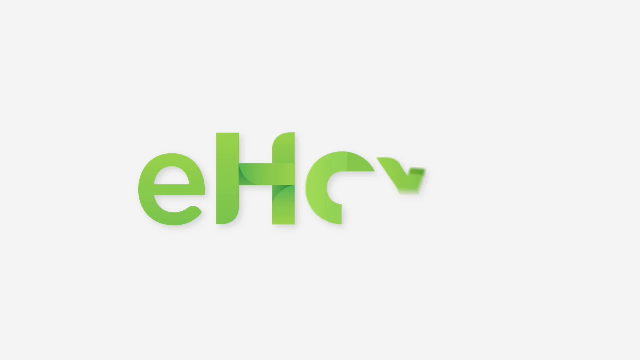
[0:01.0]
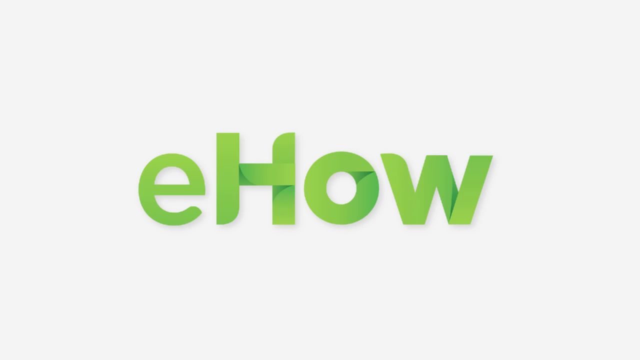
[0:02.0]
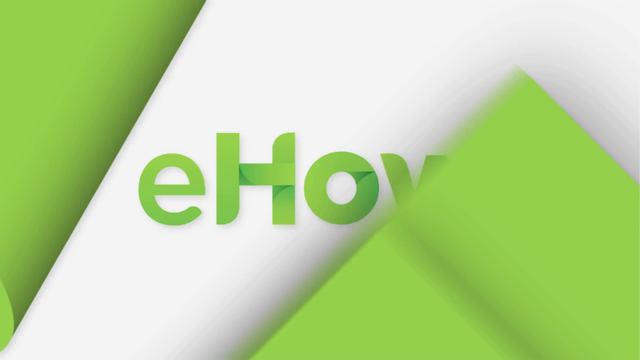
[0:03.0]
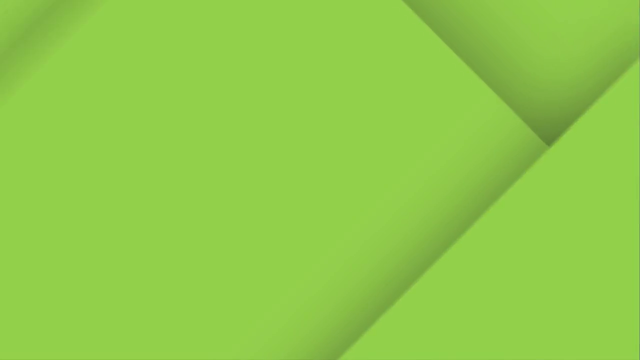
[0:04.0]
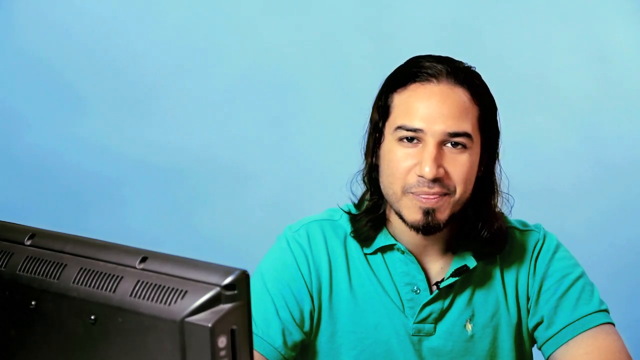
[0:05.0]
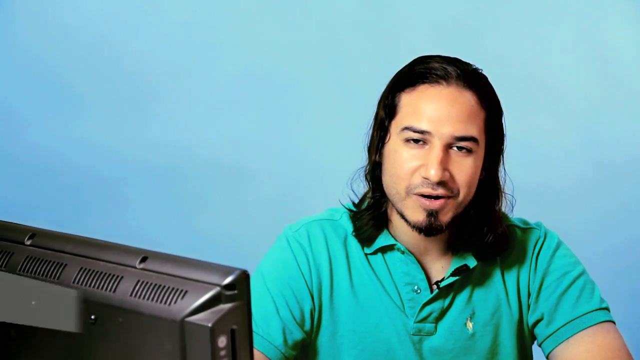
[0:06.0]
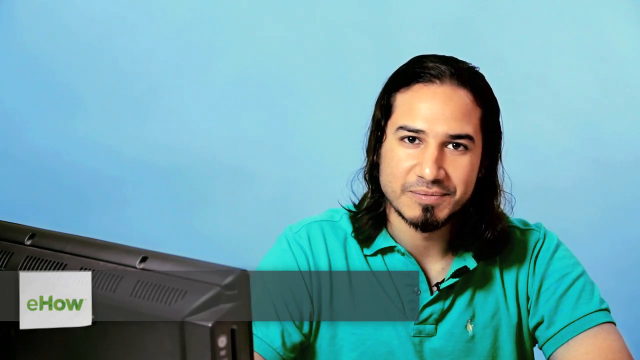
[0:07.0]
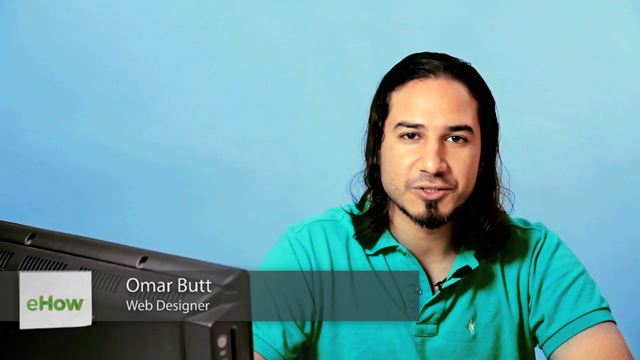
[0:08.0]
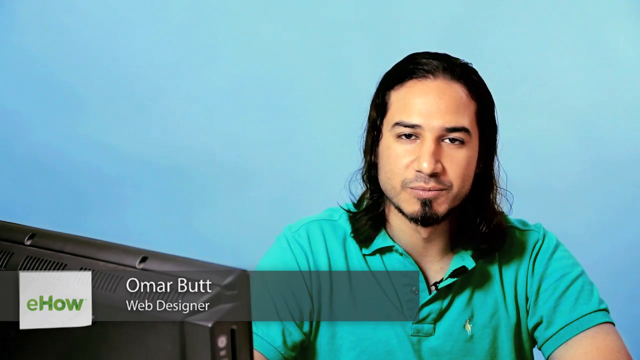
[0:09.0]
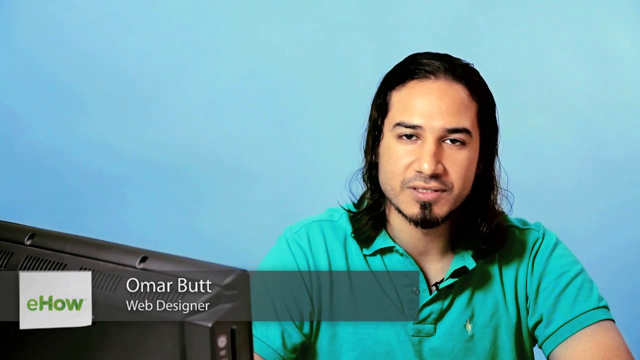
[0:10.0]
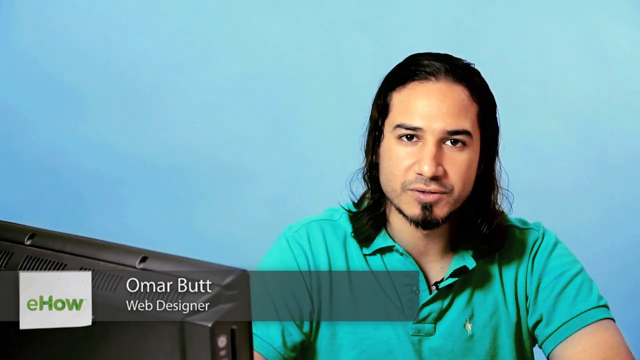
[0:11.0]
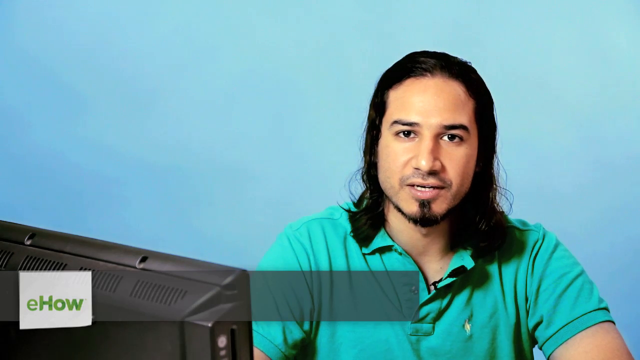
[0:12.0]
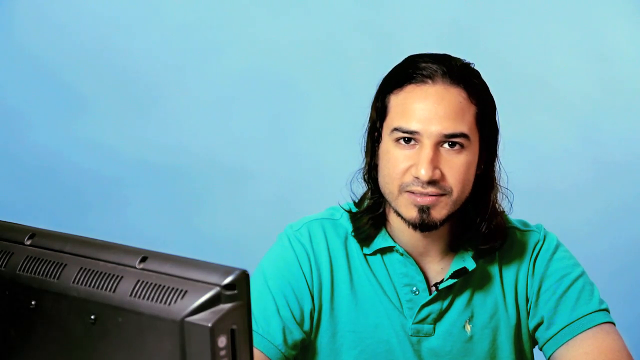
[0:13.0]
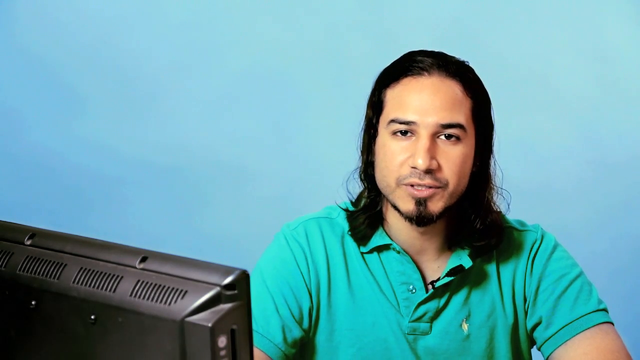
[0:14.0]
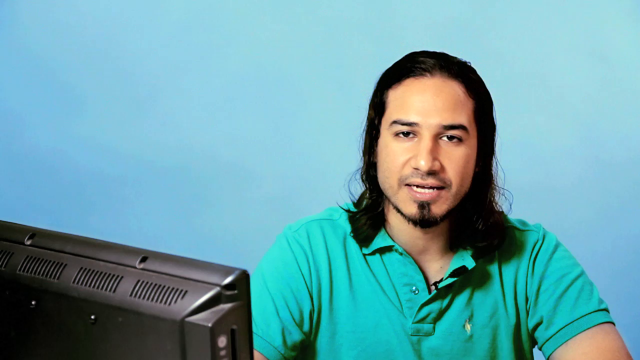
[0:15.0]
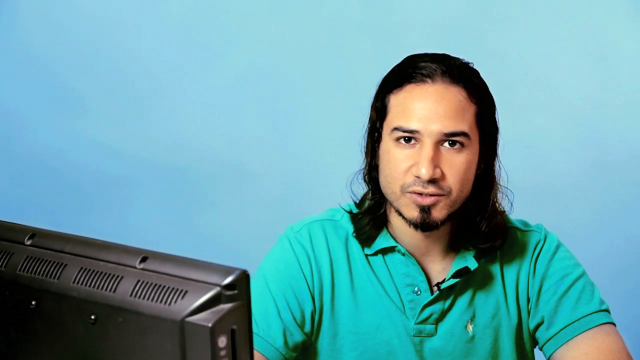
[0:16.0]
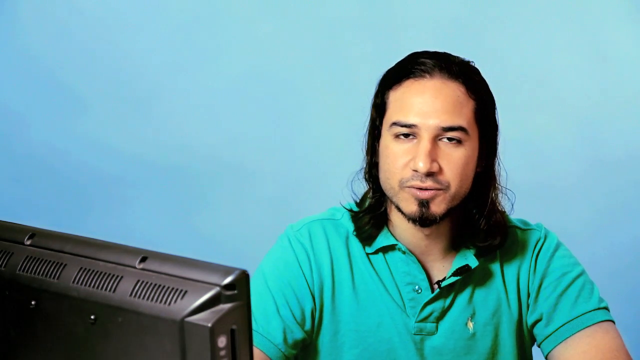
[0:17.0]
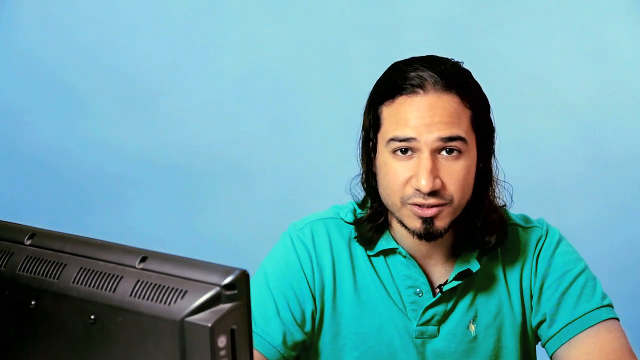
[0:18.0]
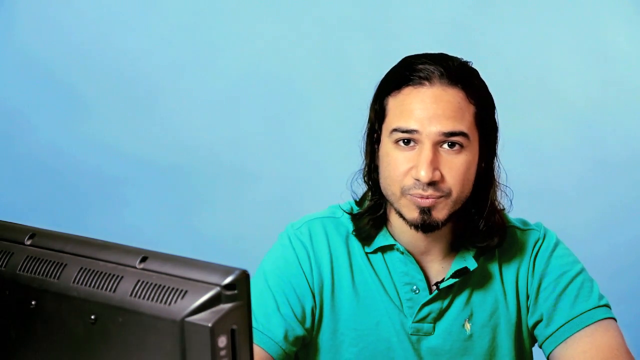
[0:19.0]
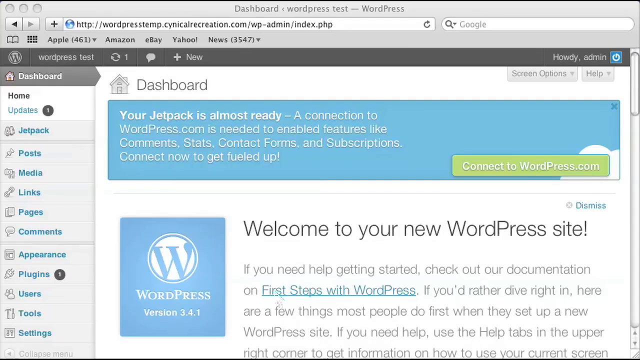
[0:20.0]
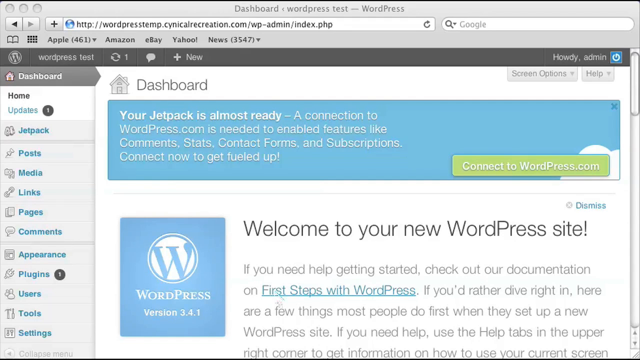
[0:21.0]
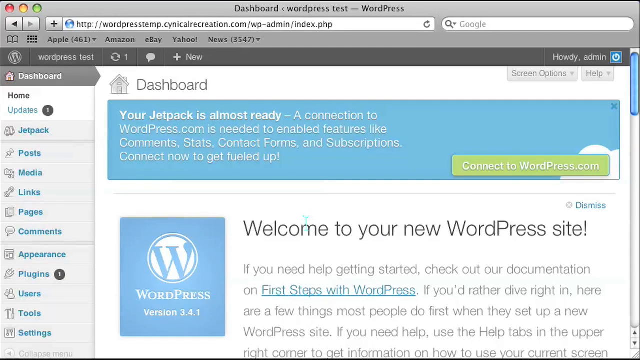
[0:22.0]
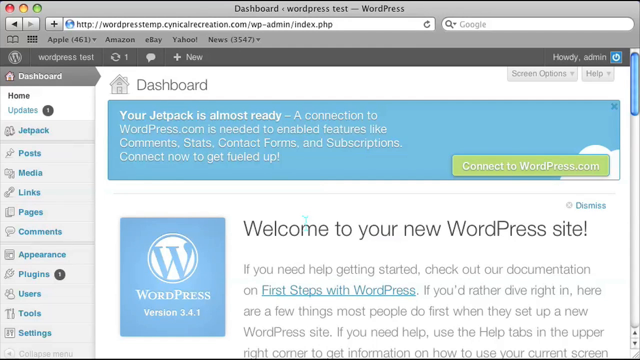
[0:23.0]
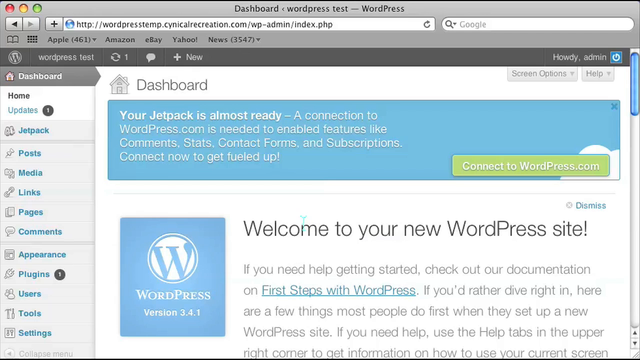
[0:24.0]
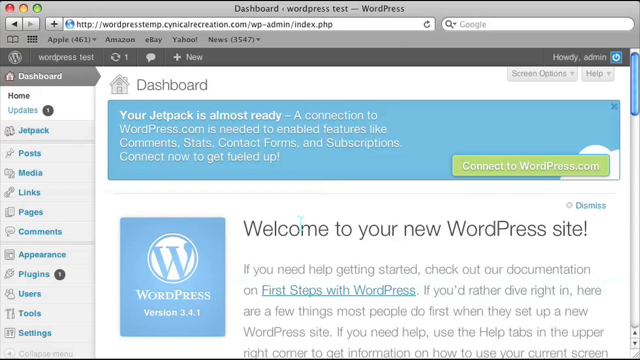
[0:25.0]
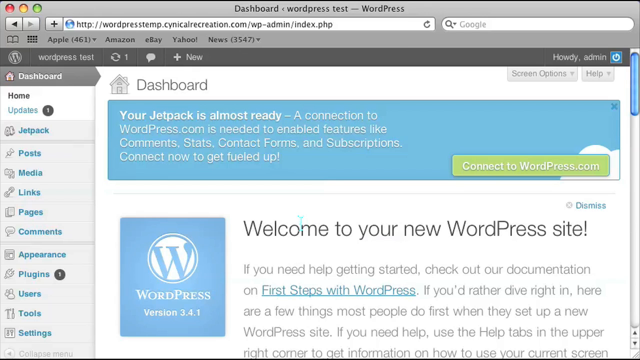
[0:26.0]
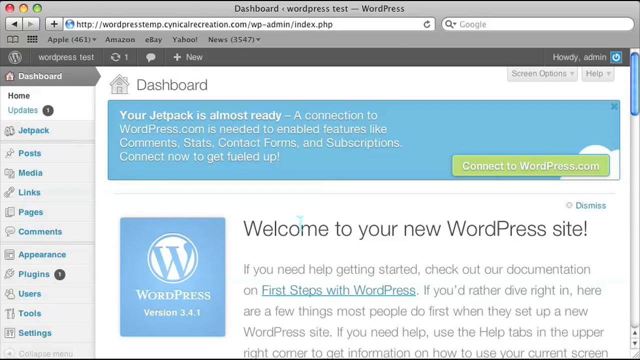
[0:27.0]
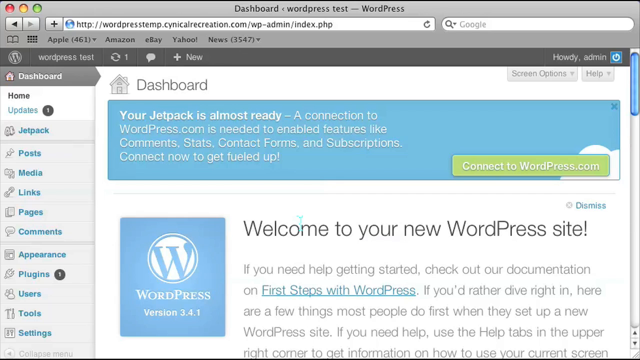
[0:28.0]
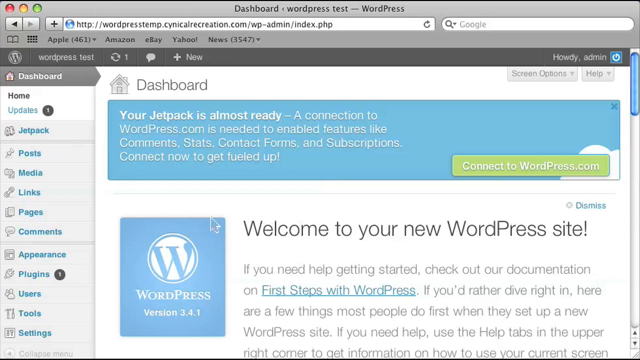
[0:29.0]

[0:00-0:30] A black screen turns white, and the word "ehal" appears in green letters. The scene then changes to a blue background. On the right side of the screen is a man who looks like he may be Native American or Mexican; he has a goatee and wears a green shirt. In the bottom left of the screen is the back of a computer monitor. The man is talking. The ehal logo appears in the bottom left of the screen, with "omar" to its right and "web designer" below. As he talks, he blinks and his mouth moves, but little else moves; he nods his head slightly up and down, and his head makes subtle movements to the left and right. His eyes glance down at the computer monitor, then his head turns toward it and he looks at it. The monitor's web page is shown: at the top it says "dashboard". Below this, in white letters on a blue-black background, it says "your jetpack is almost ready connection to wordpress.com is needed to enable features like comment stats contact forms and subscriptions connect now to get fueled up". Below that, in black letters on a white background, it says "welcome to your new wordpress site". A computer pointer on the screen, just a vertical blue line, moves to the left and clicks on Appearance.